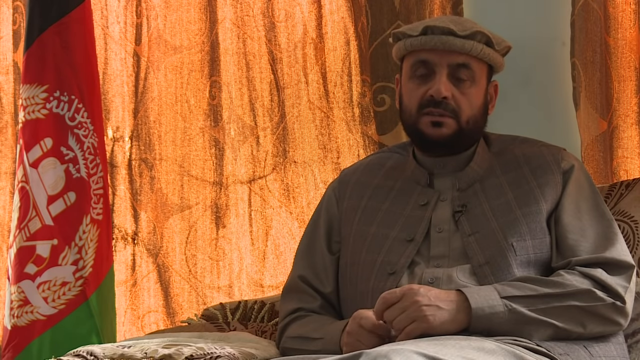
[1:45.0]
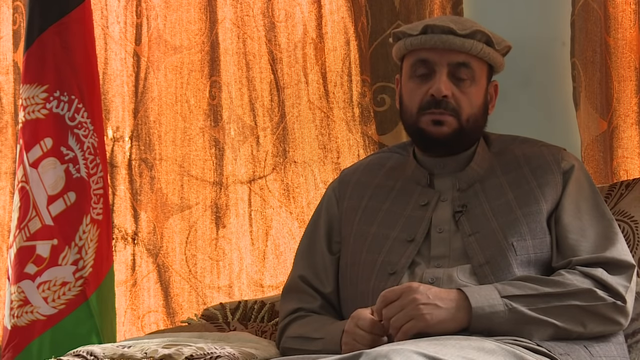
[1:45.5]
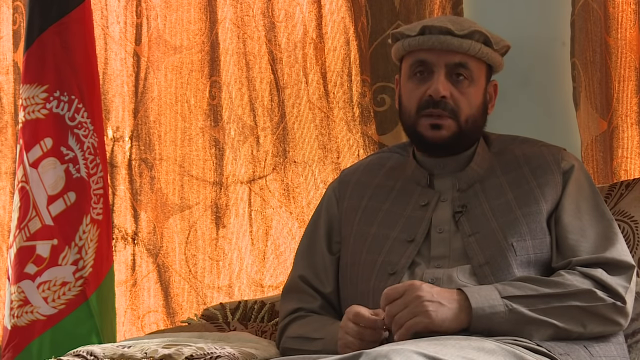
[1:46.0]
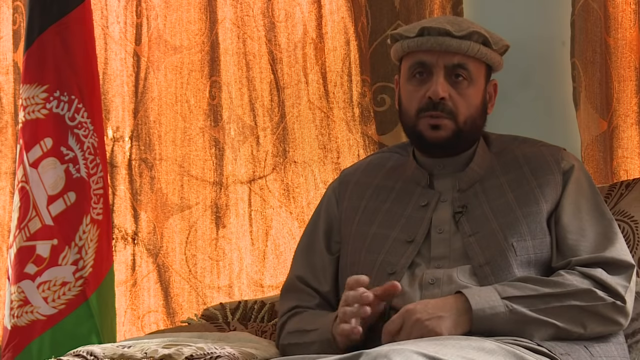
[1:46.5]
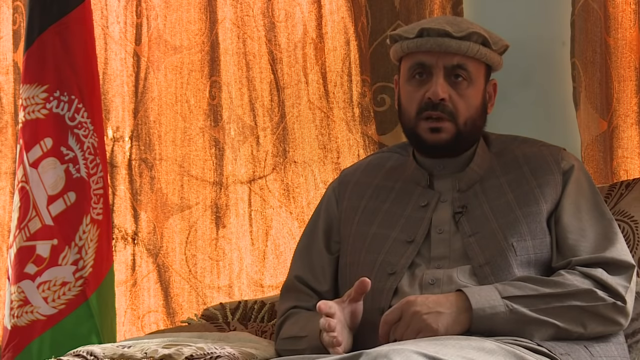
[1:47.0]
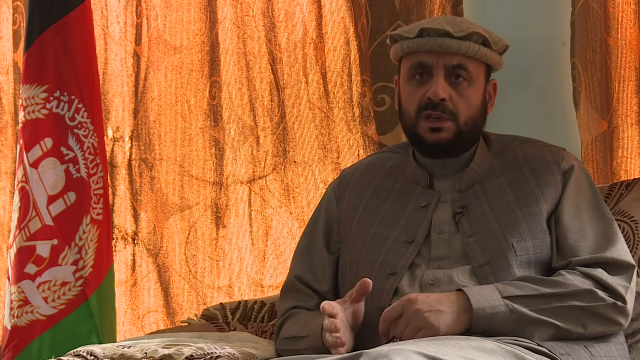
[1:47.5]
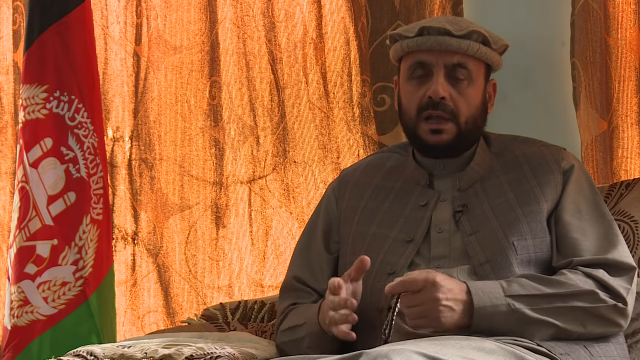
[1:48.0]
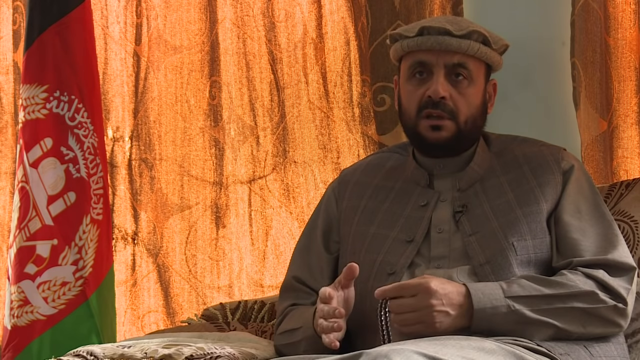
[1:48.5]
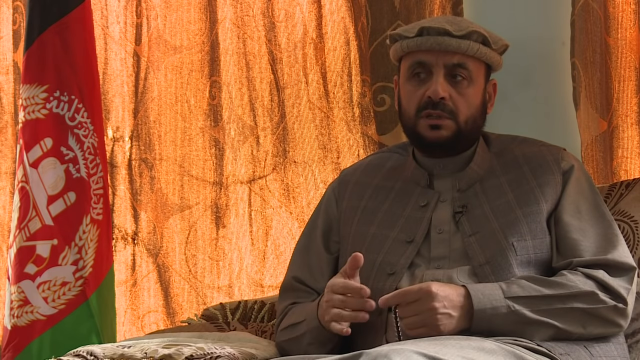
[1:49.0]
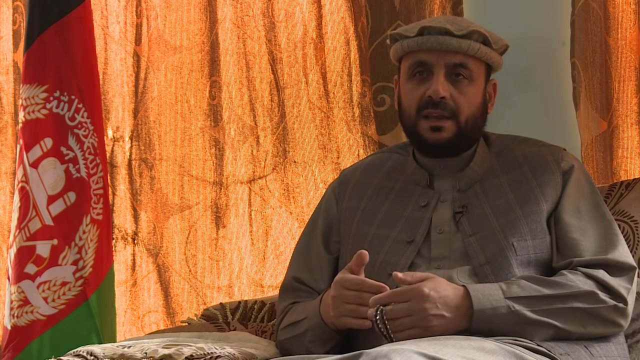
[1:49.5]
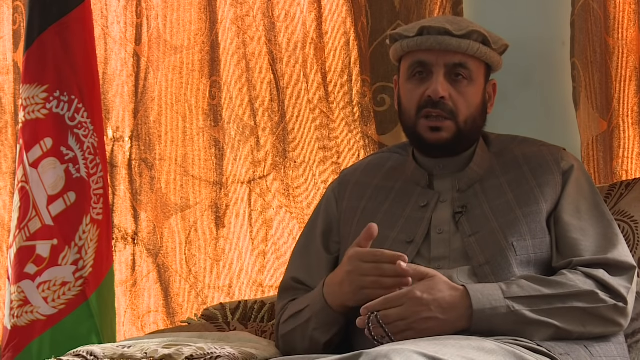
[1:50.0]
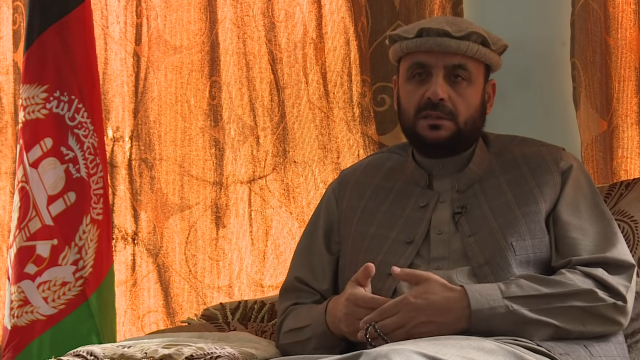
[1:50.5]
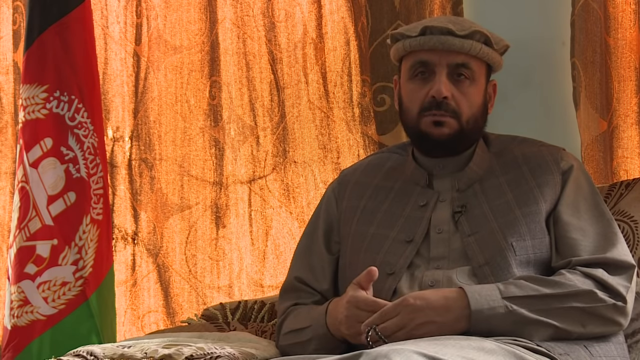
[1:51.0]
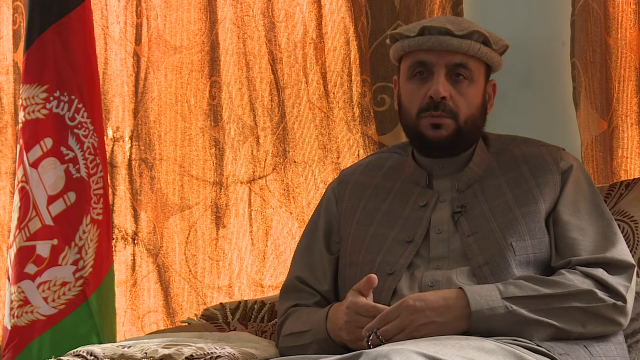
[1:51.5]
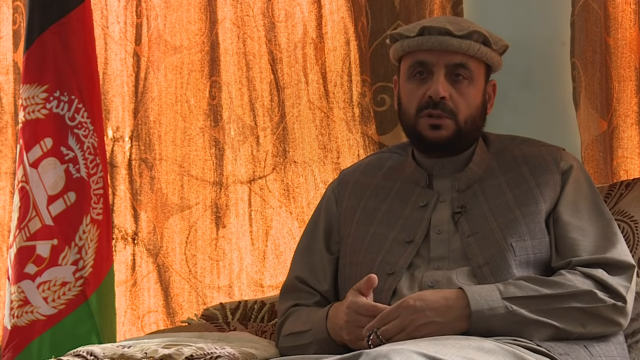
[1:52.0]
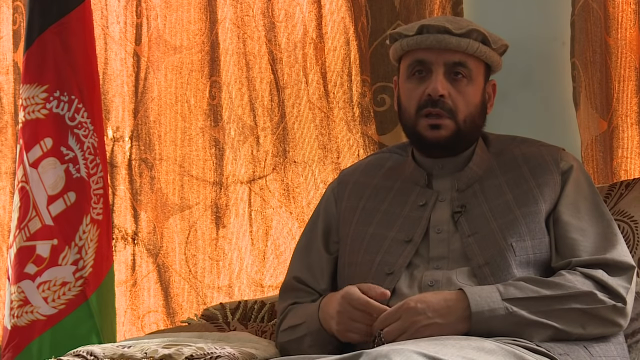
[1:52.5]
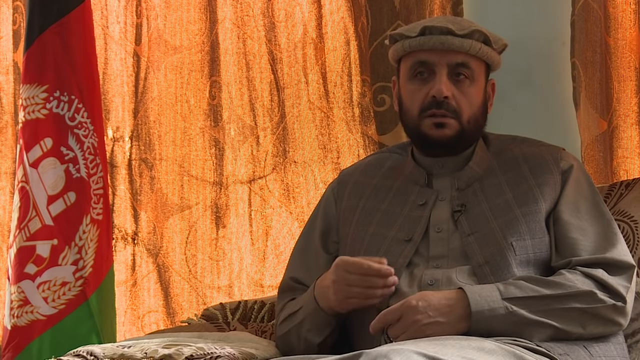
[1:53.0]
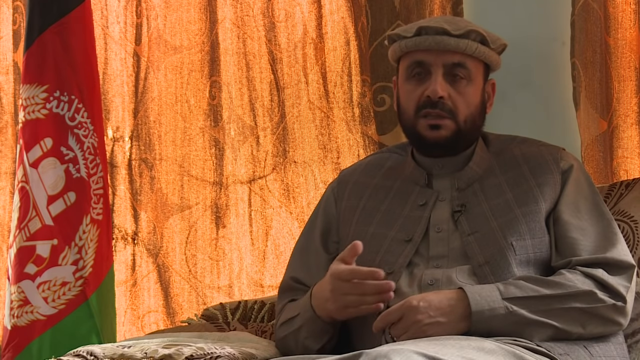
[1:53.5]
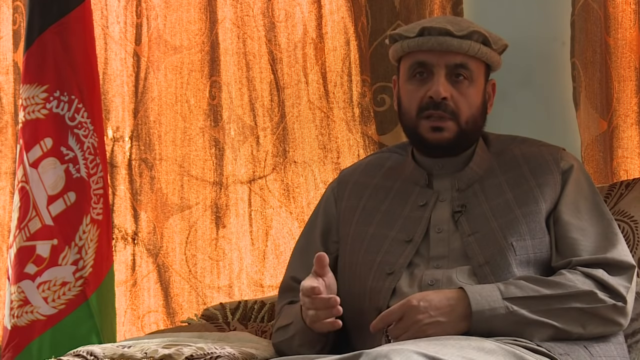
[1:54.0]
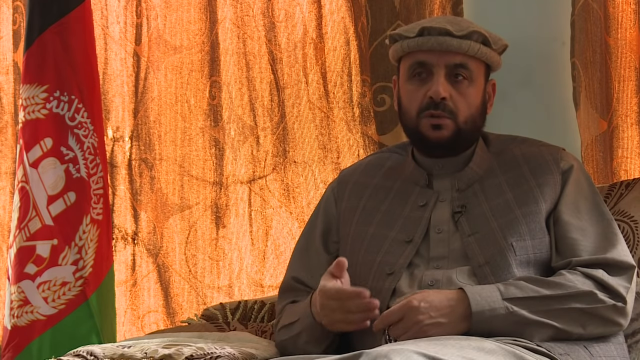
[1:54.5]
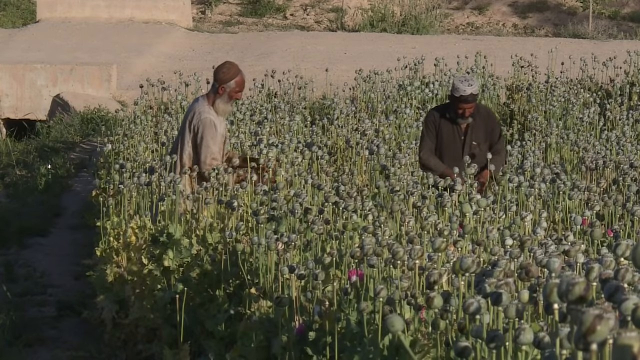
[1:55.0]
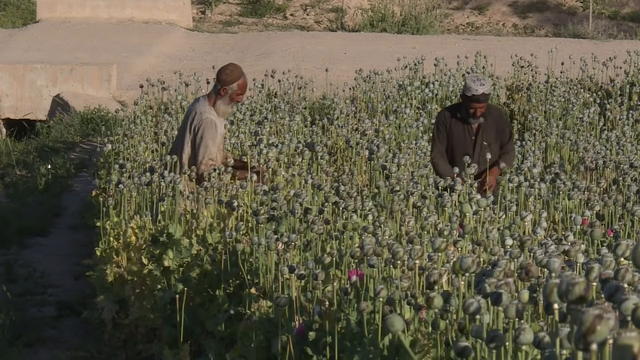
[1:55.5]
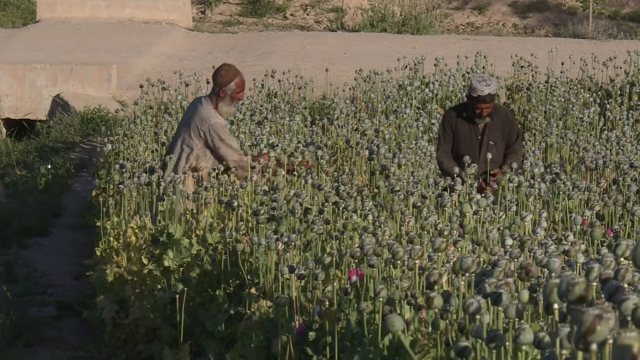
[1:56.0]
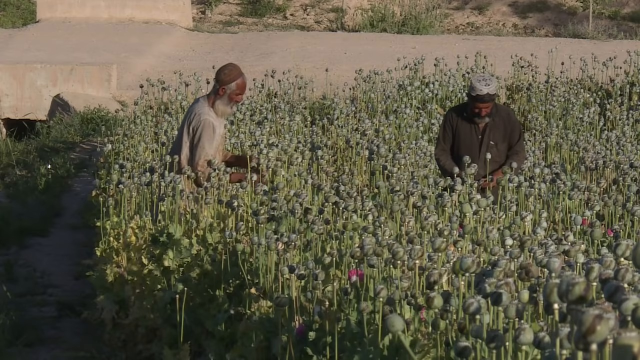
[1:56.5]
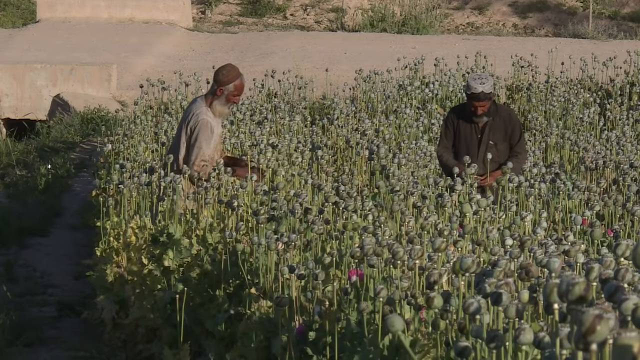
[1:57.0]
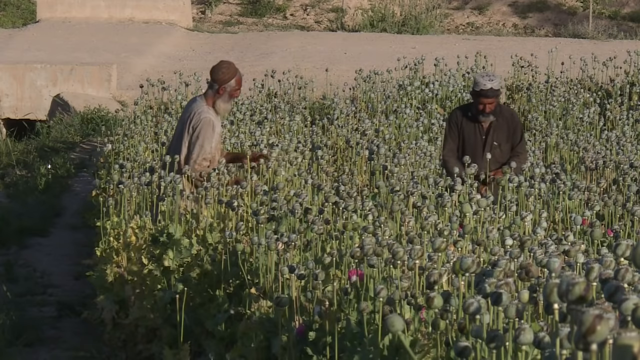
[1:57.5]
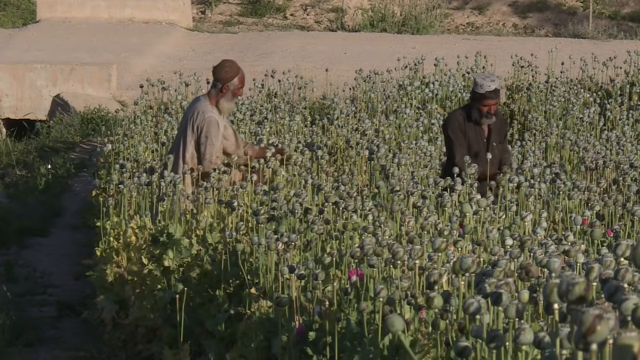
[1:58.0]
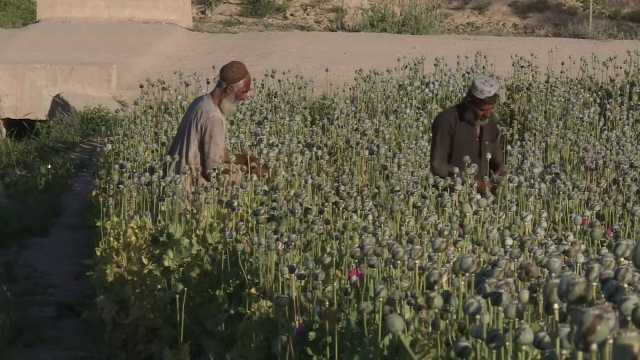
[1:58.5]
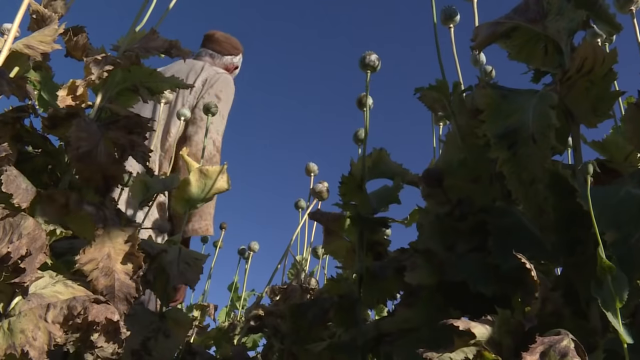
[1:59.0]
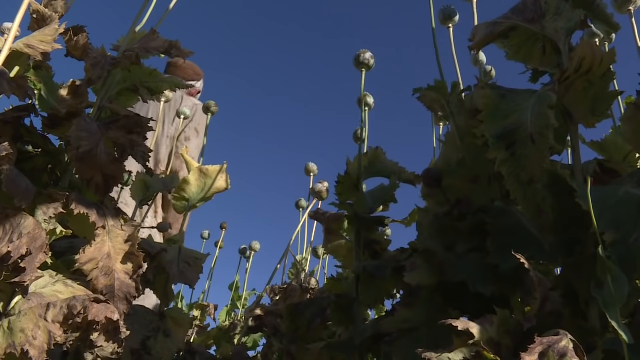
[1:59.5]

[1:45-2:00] The governor continues talking, now with his right hand up, palm kind of out, moving it around. He appears to have a rosary wrapped around his left hand, which he kind of rubs with his thumb as he talks. He taps his right hand into his left hand and then waves it out a little to the right. It cuts to two men working in a poppy field: the one on the left faces right, and the one on the right faces the camera. The man on the left wears a light brown shirt and darker brown hat, looks older and has a little beard. The other man is blocked by an advertisement for the website. Just beyond the poppy field, about two-thirds of the way up, is what looks like a dirt road and then more poppy field. A close-up of the poppies shows the older man reaching out to the right, pulling a poppy back and picking it, and it looks like he is cutting it as the earlier man did. It looks to be a very hot day, and the poppies are green and purple. A ground-level shot then looks up through the poppies along what looks like a path, and the man in the light brown shirt walks away from the camera, deeper in.